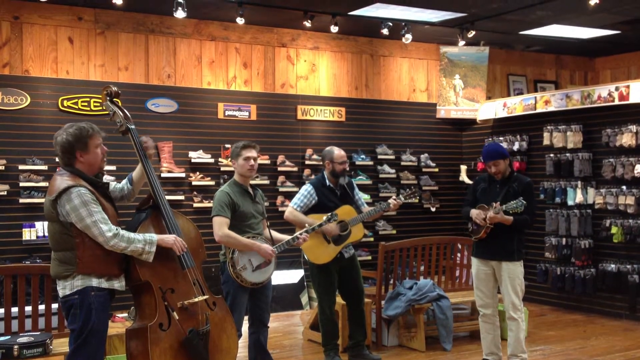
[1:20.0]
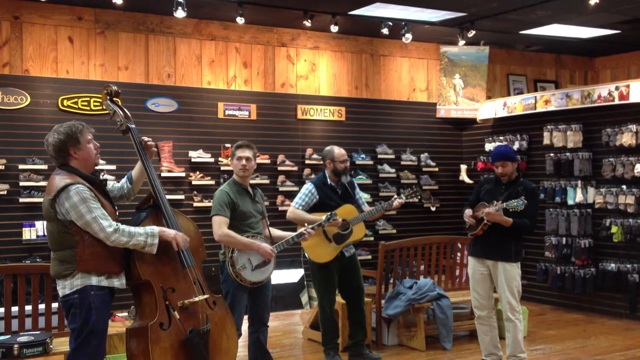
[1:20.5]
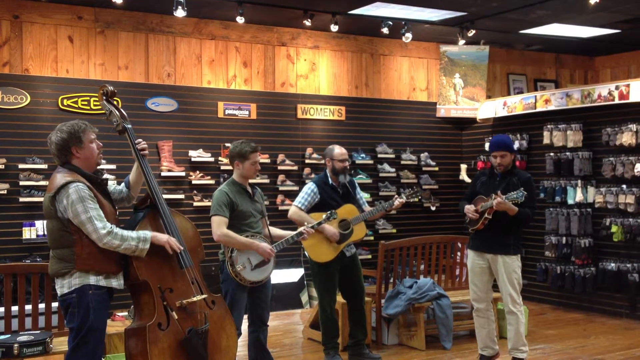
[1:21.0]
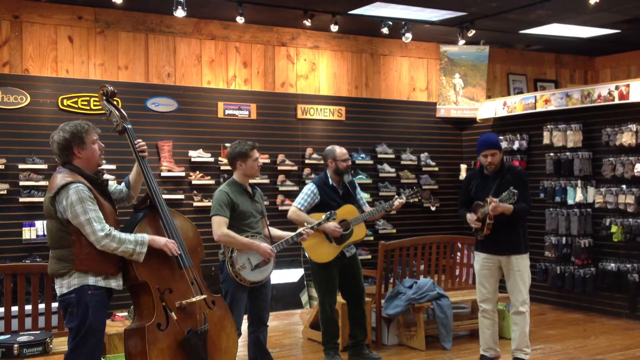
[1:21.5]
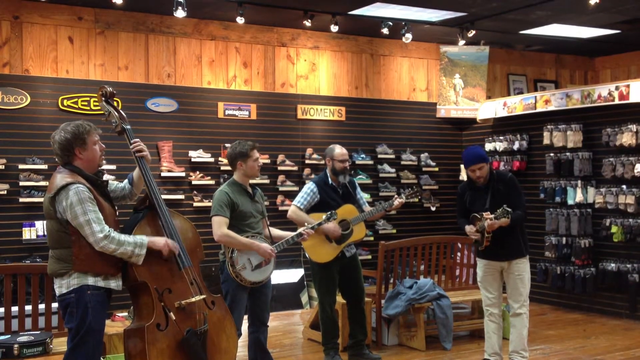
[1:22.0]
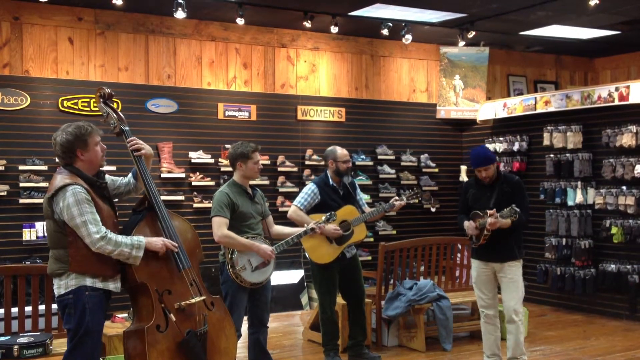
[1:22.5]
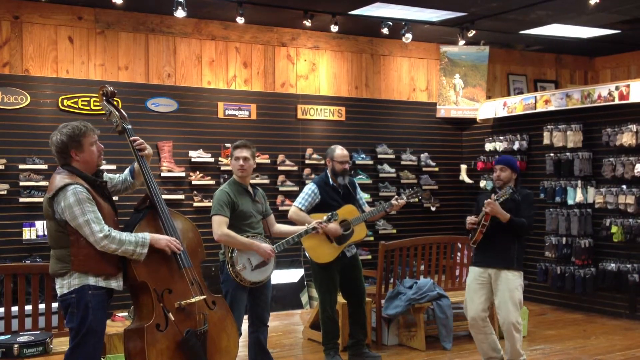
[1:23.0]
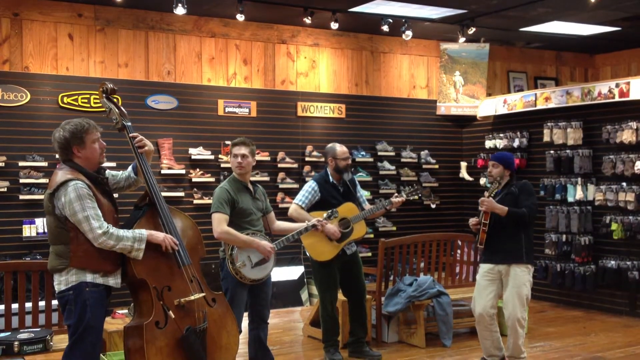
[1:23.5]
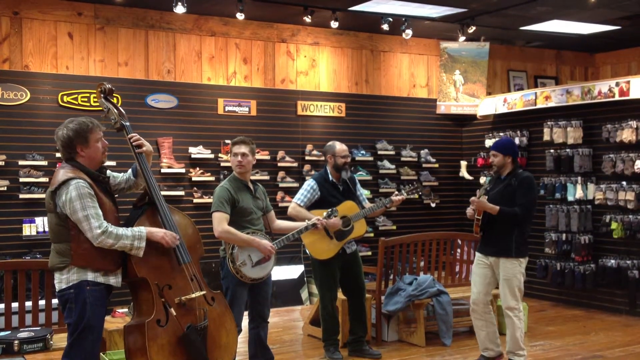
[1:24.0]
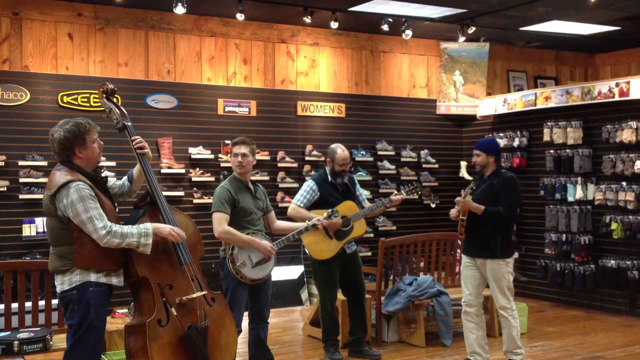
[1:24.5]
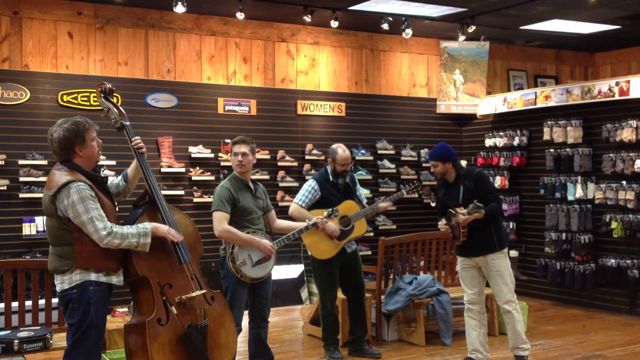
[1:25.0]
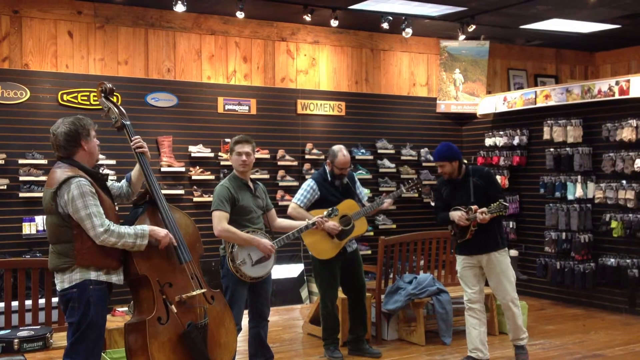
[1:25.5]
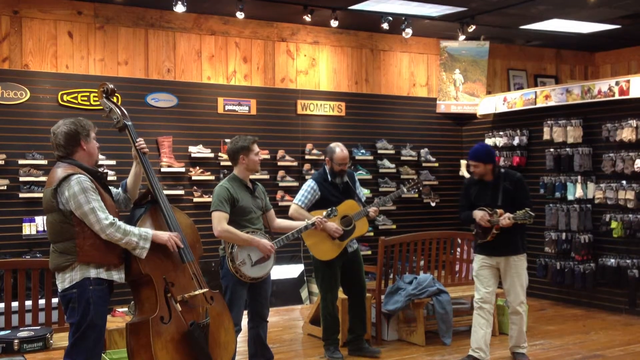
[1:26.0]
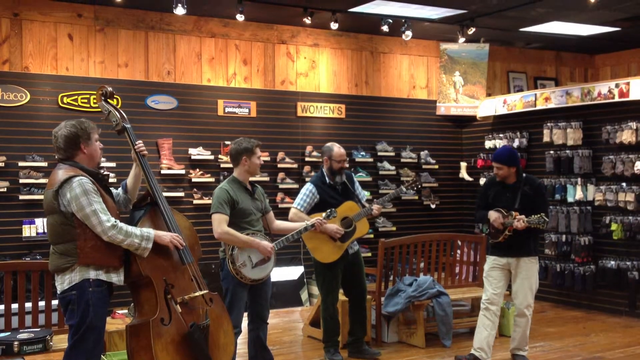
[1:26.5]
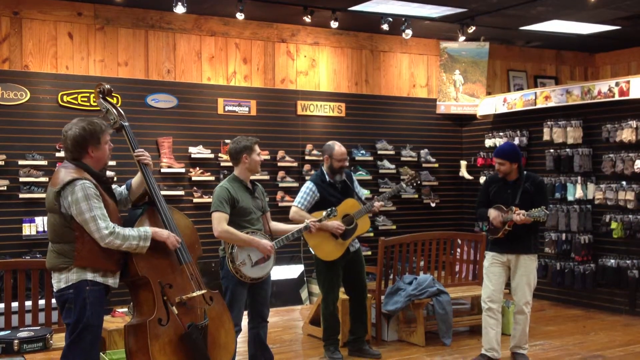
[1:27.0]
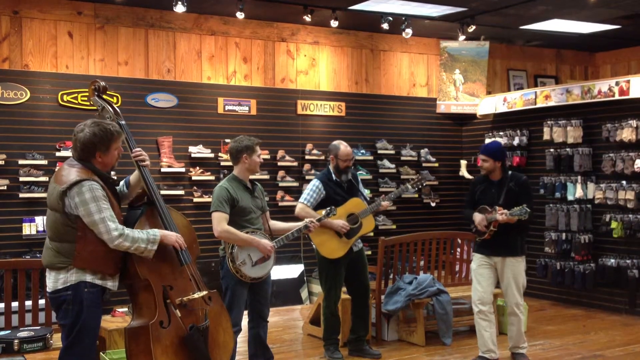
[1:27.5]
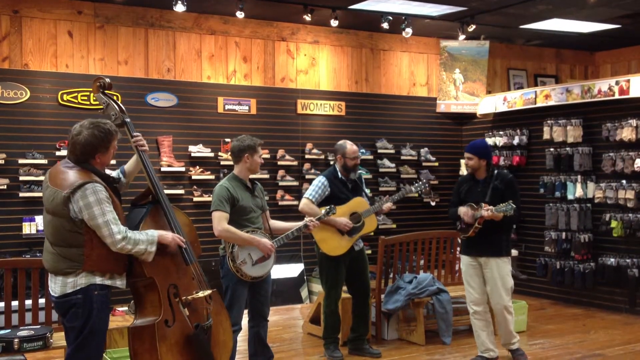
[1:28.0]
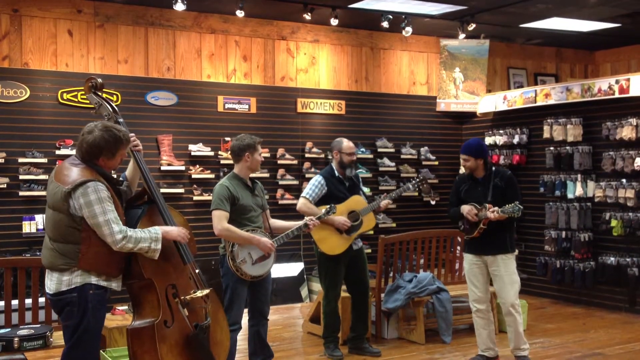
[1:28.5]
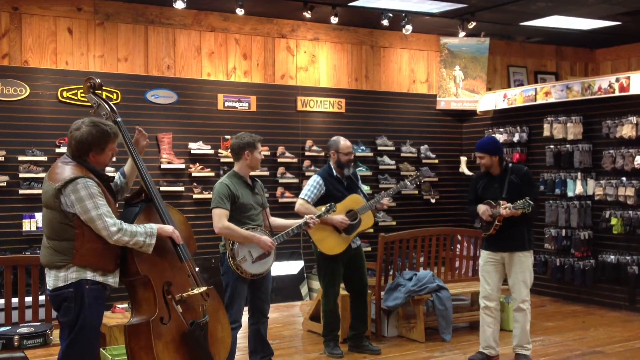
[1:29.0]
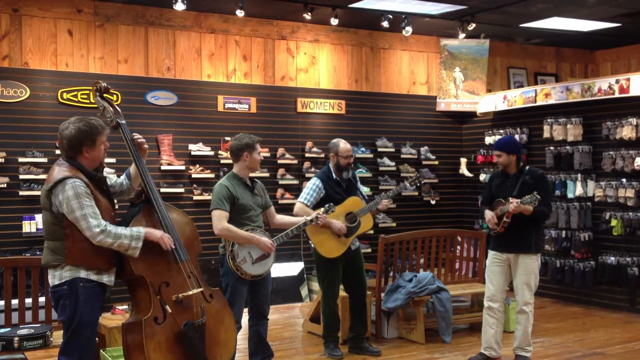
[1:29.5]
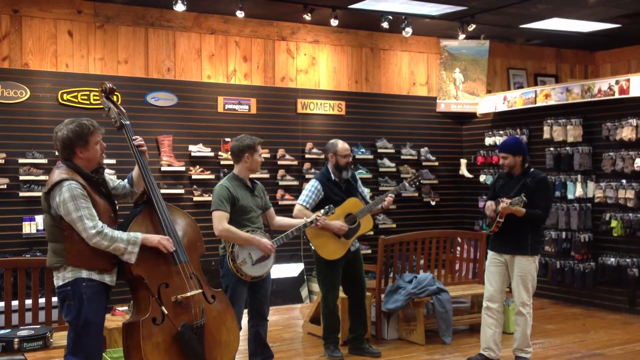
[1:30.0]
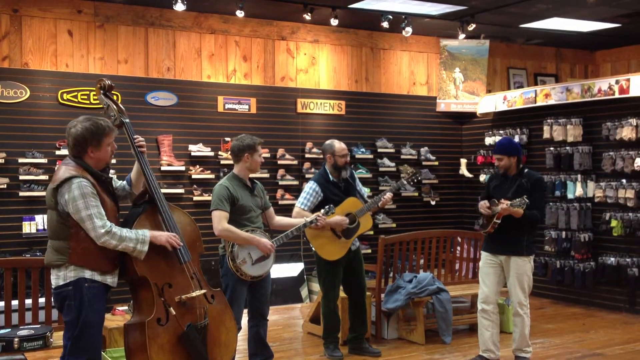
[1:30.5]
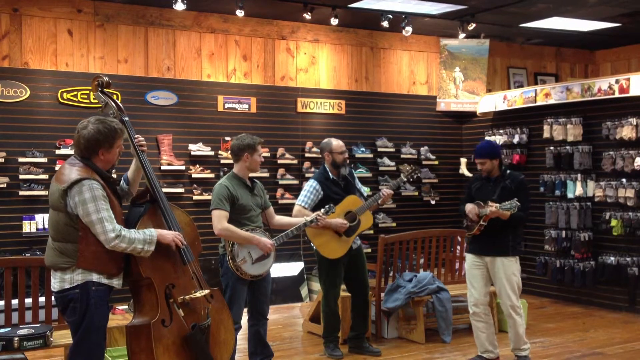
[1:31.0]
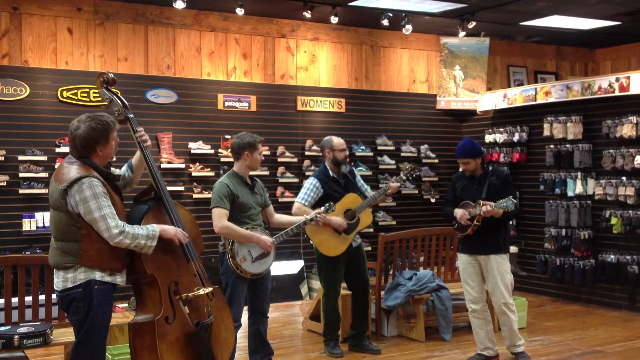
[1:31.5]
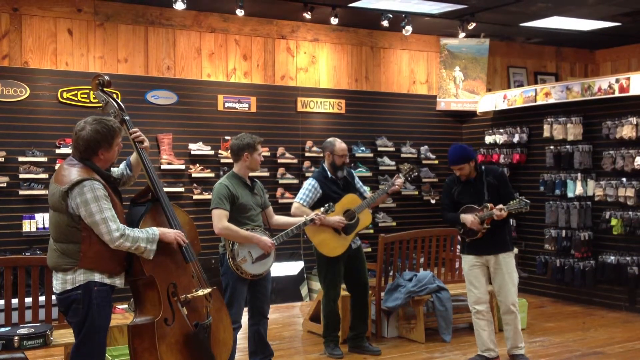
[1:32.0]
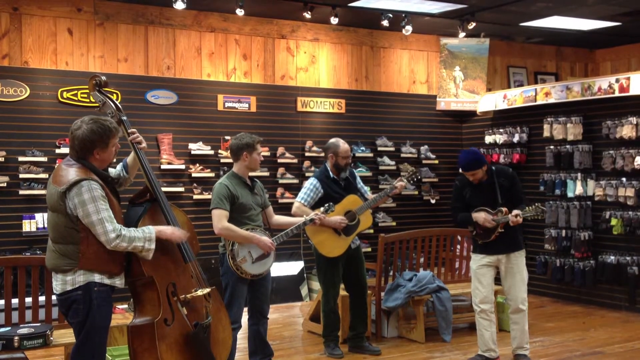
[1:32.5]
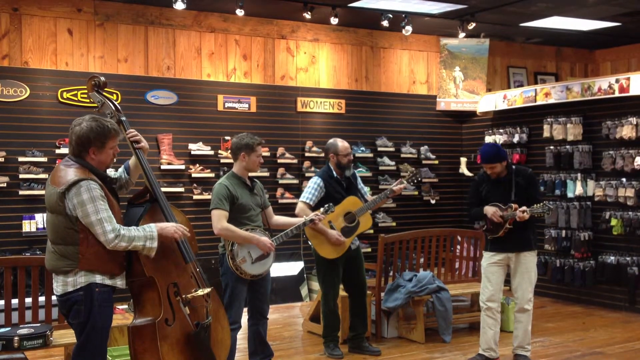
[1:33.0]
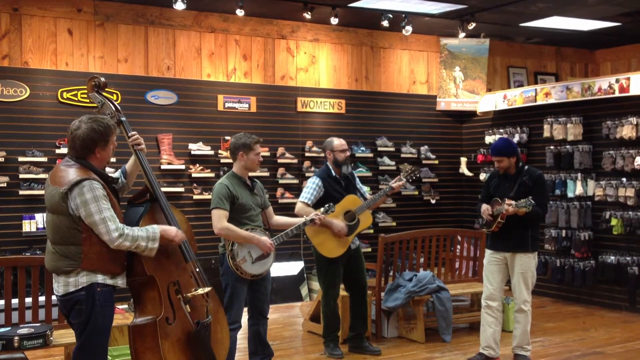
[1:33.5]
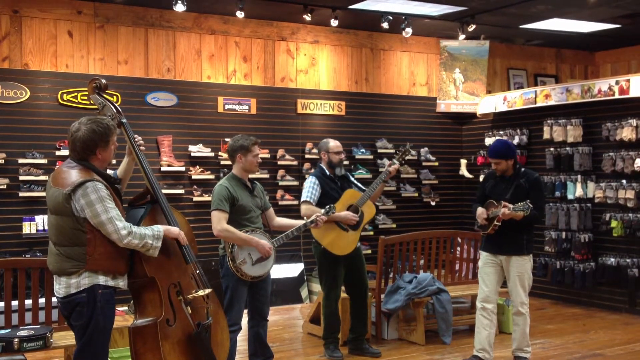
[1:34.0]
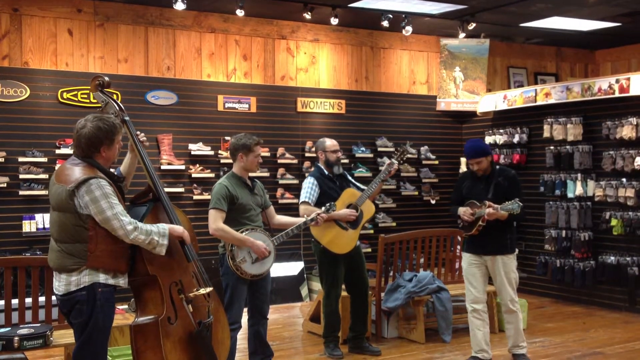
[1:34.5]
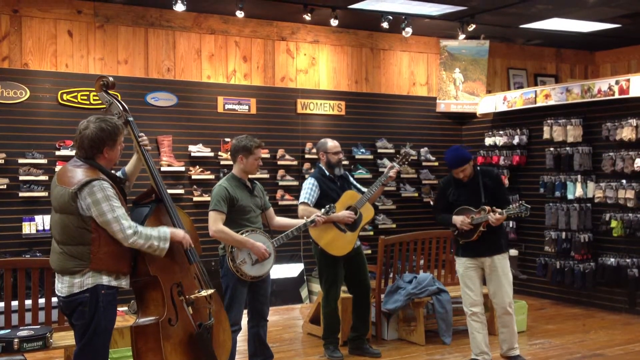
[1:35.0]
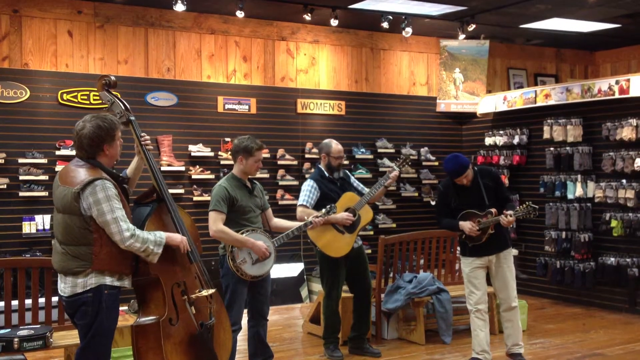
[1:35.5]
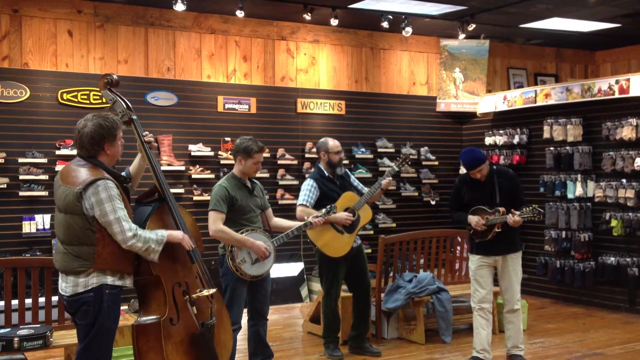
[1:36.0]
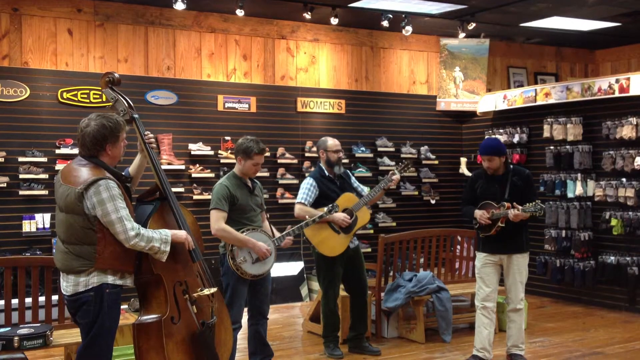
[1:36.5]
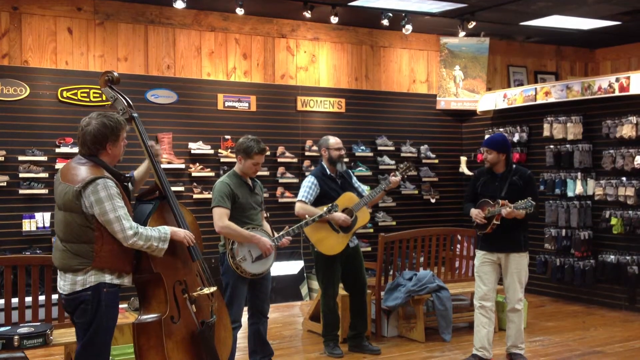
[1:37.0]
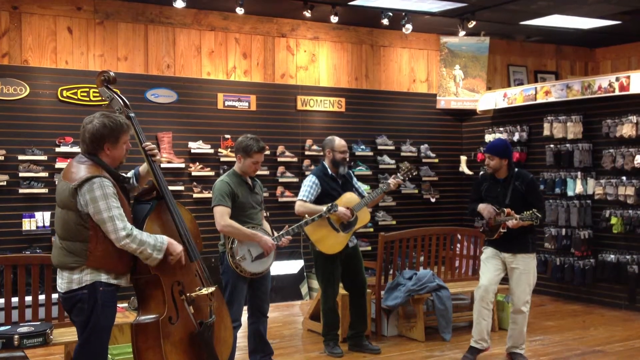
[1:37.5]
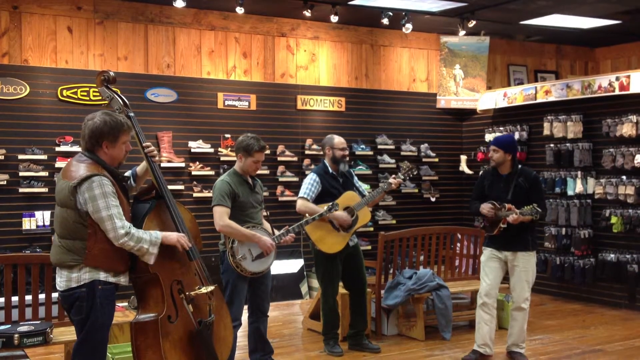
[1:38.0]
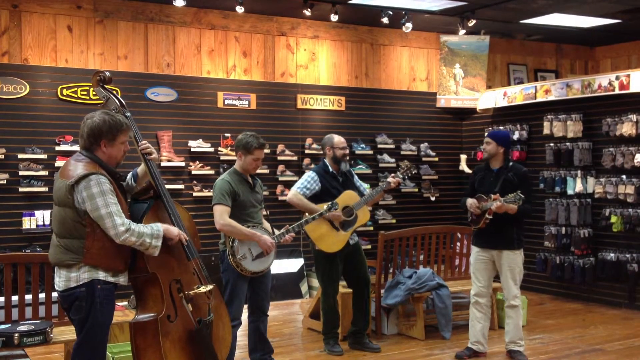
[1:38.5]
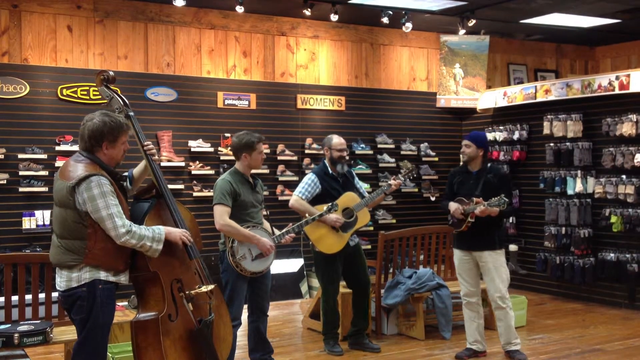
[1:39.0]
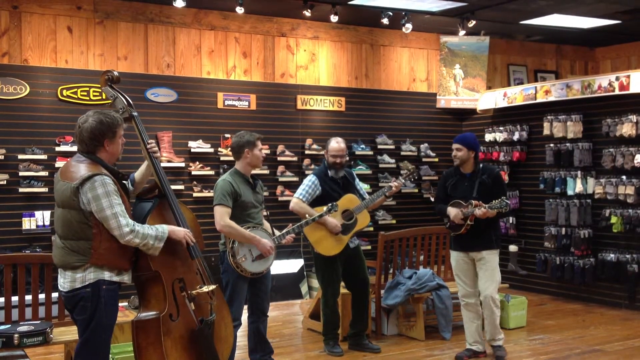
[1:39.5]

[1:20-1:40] The four men are still playing. The man with the smaller guitar is really into it, with a lot of extra movement, smiling and kind of paying attention to the man with the acoustic guitar, who has a beard; whether the acoustic player is still singing is unclear, and they apparently are not singing at this point but playing an instrumental part. All four bob their heads more than before. The man with the small guitar keeps looking down at his guitar, almost as if improvising a little. The banjo player looks around at everyone and smiles, and may have said something.